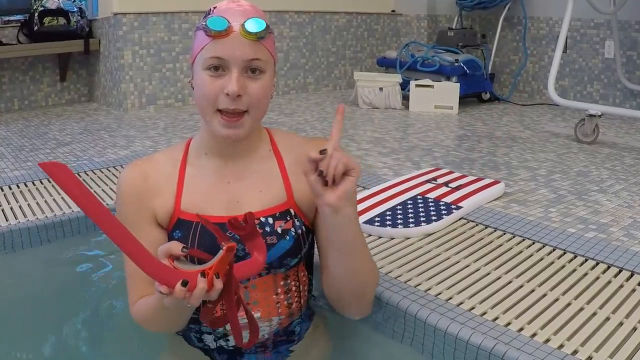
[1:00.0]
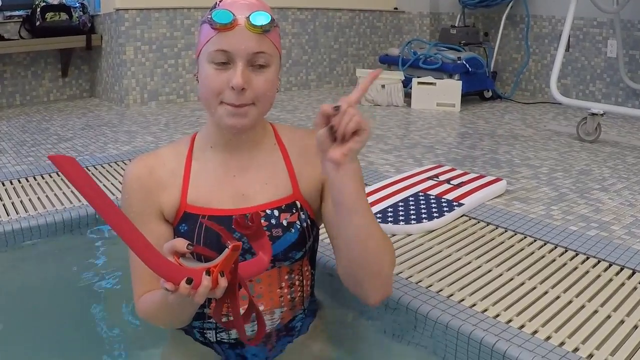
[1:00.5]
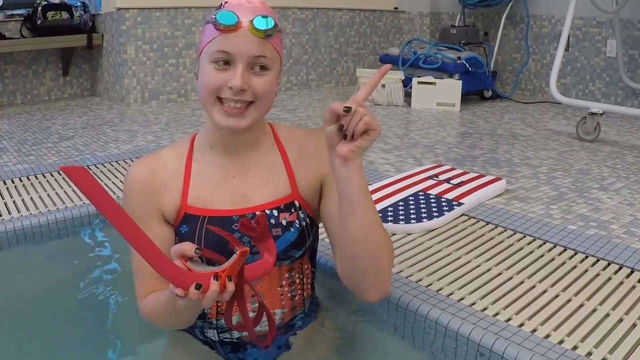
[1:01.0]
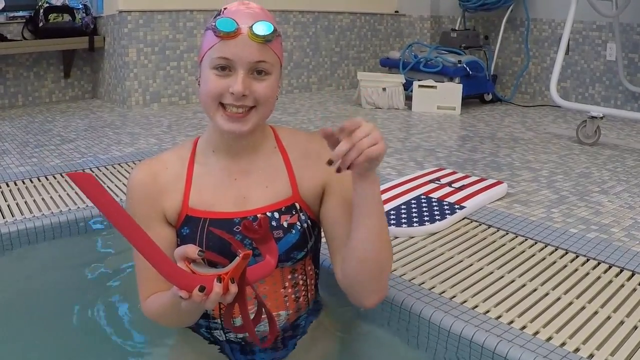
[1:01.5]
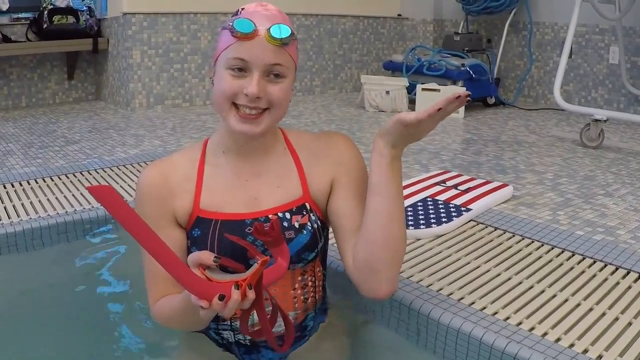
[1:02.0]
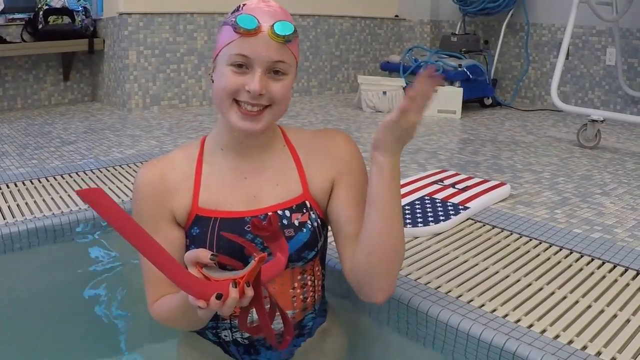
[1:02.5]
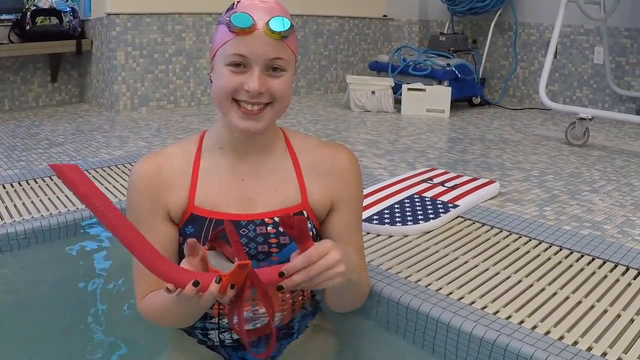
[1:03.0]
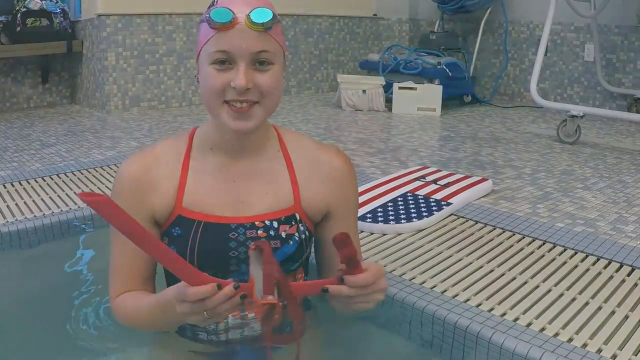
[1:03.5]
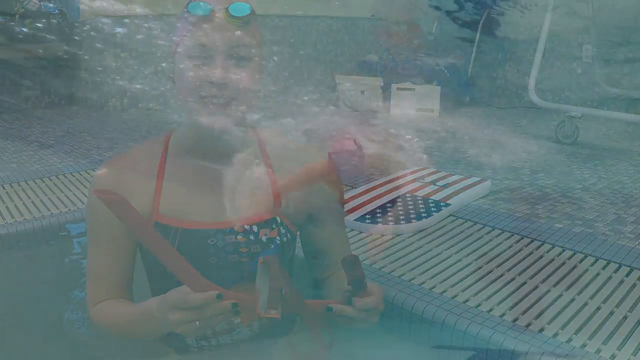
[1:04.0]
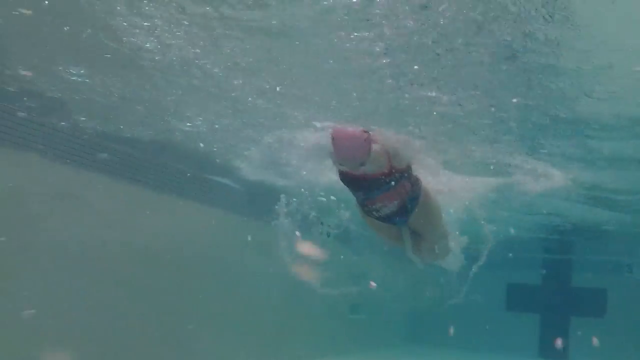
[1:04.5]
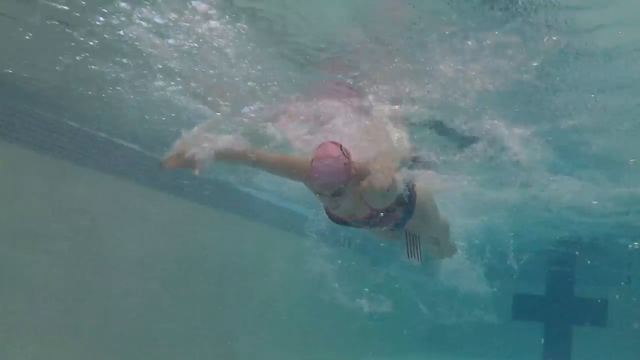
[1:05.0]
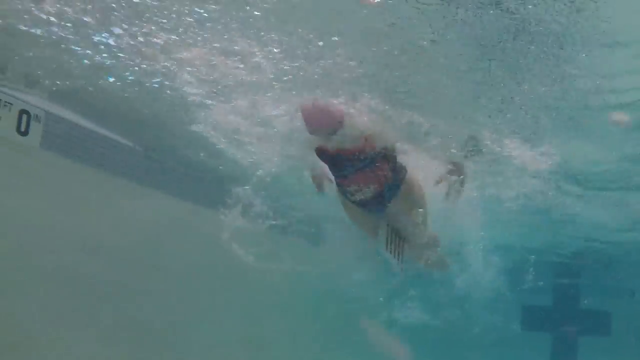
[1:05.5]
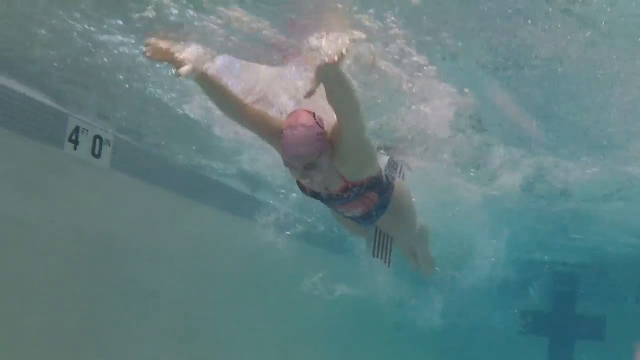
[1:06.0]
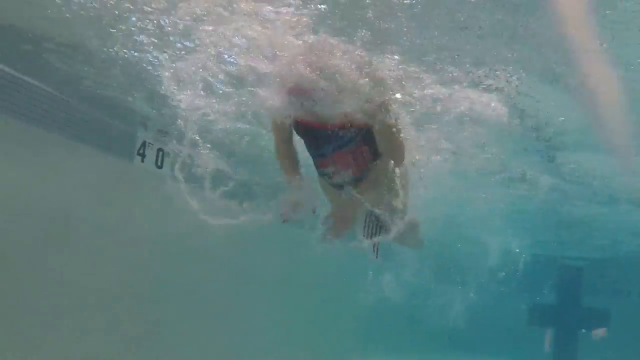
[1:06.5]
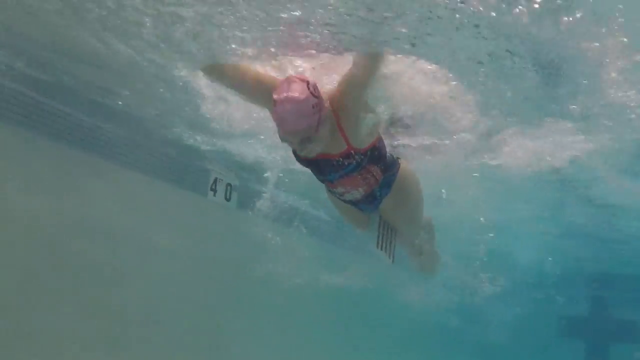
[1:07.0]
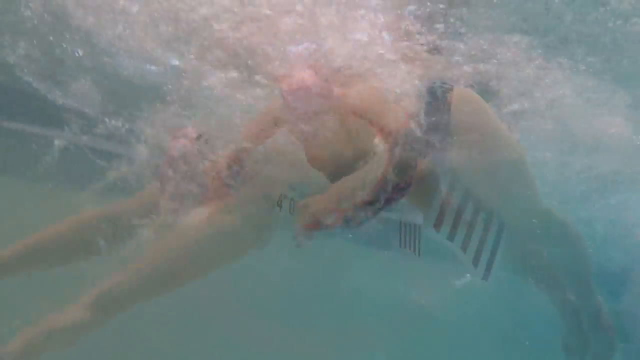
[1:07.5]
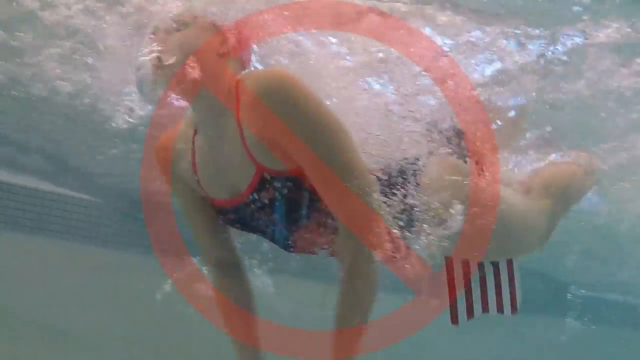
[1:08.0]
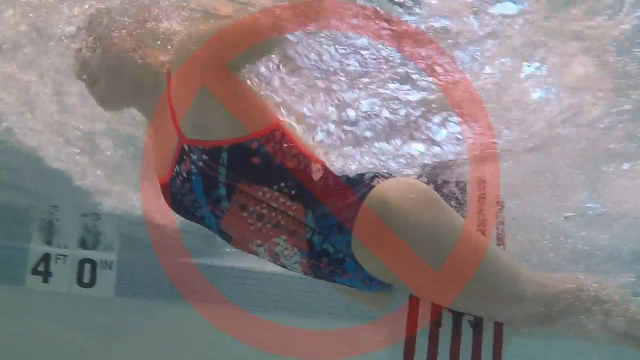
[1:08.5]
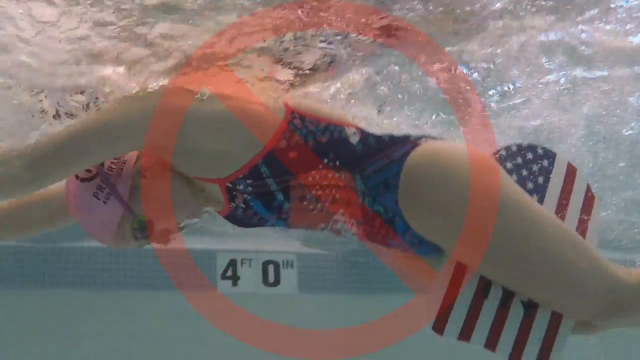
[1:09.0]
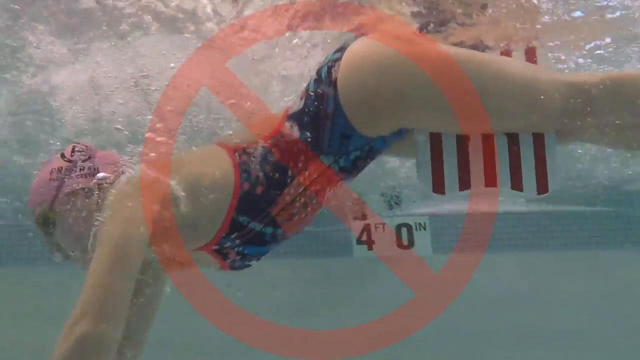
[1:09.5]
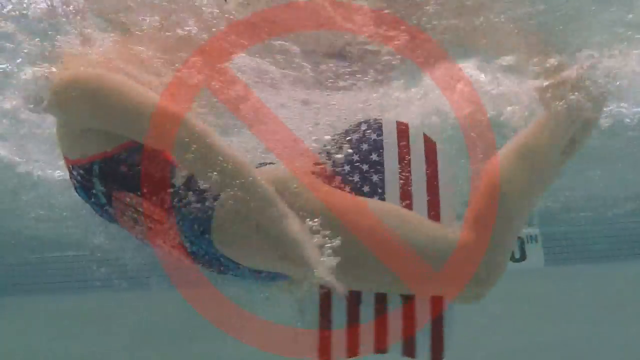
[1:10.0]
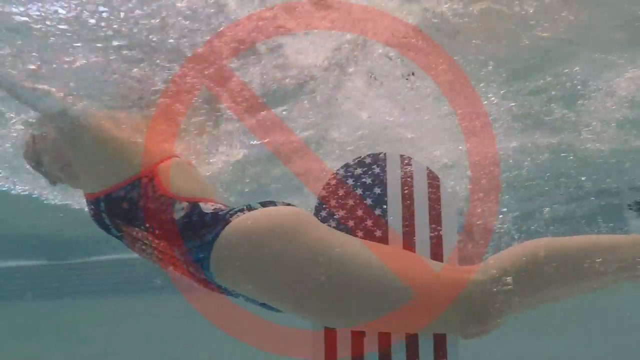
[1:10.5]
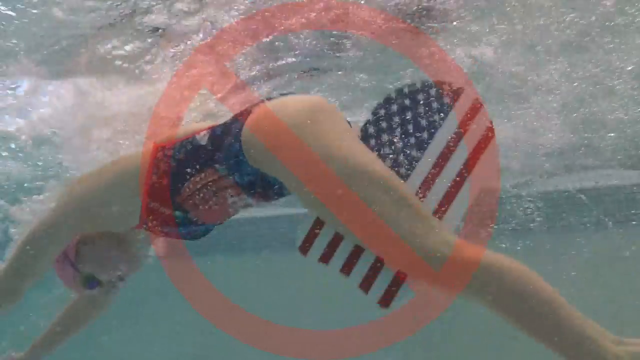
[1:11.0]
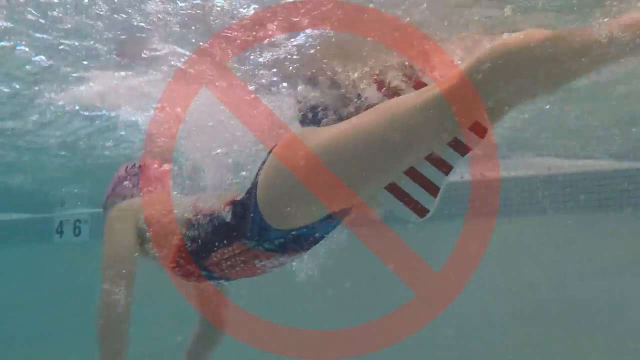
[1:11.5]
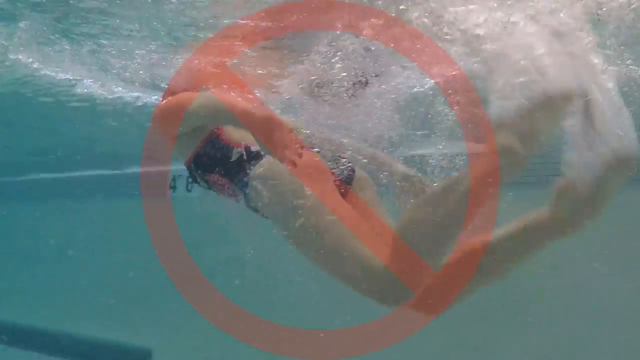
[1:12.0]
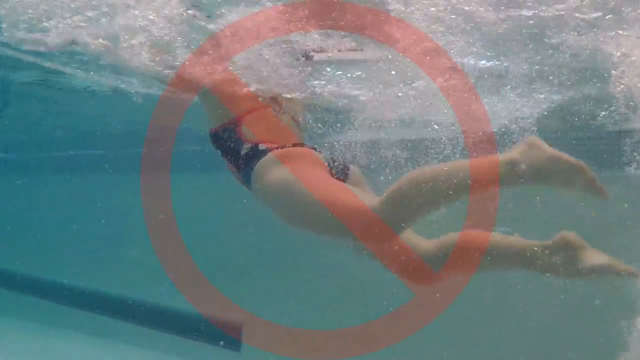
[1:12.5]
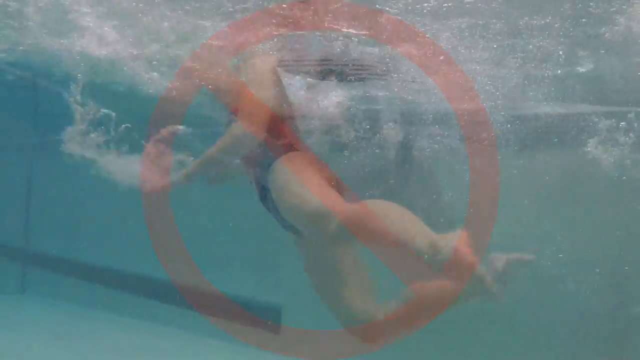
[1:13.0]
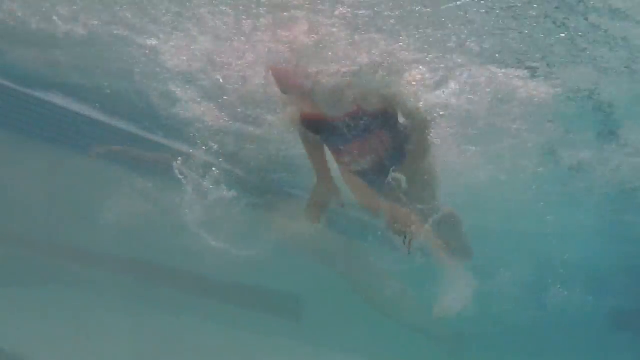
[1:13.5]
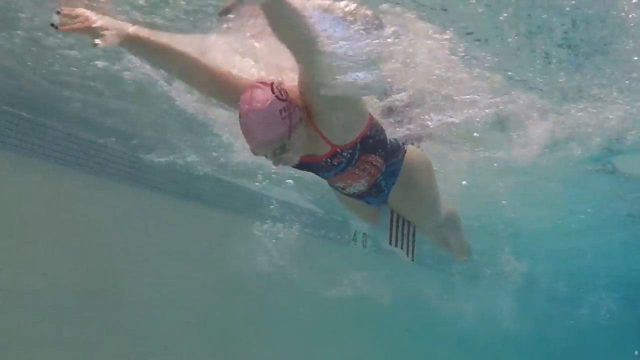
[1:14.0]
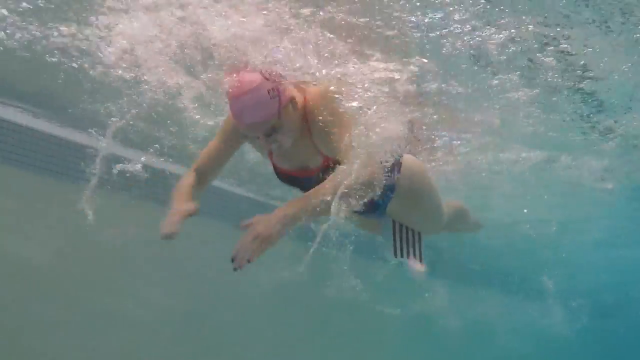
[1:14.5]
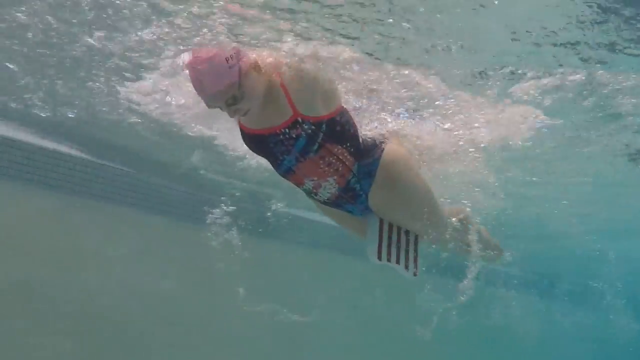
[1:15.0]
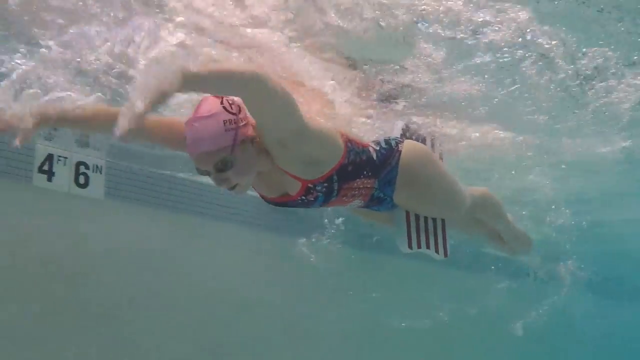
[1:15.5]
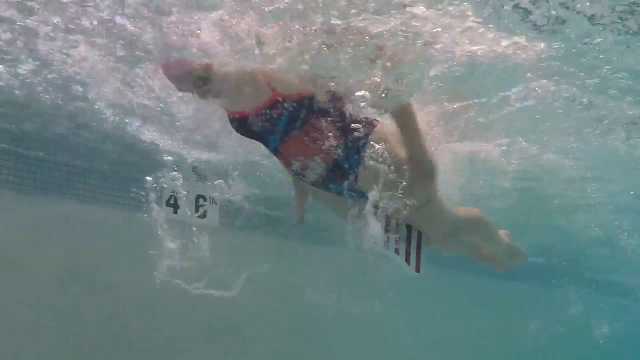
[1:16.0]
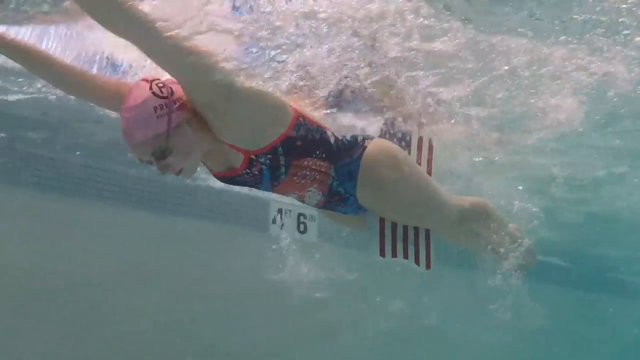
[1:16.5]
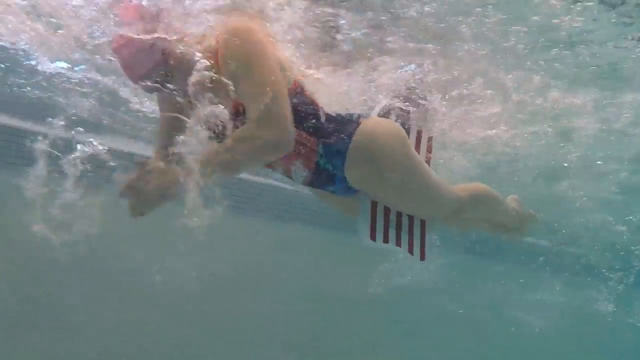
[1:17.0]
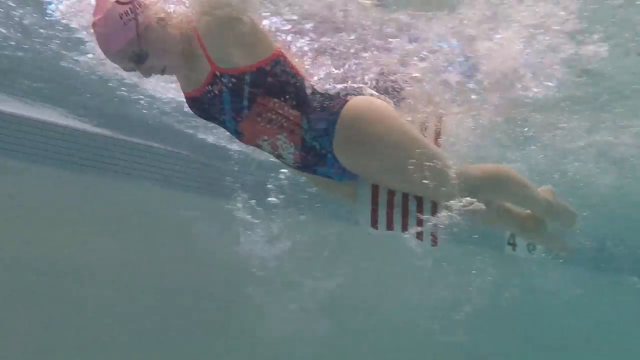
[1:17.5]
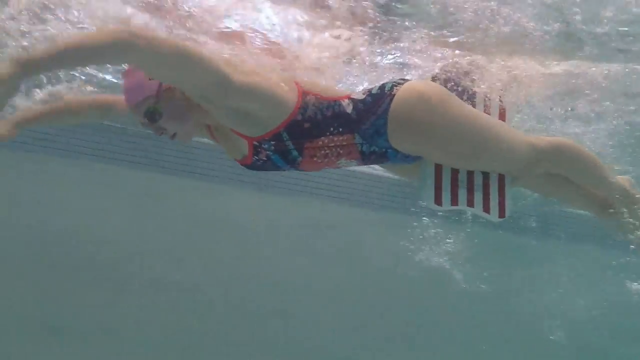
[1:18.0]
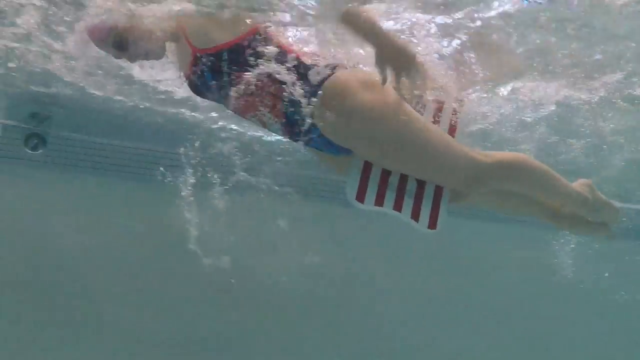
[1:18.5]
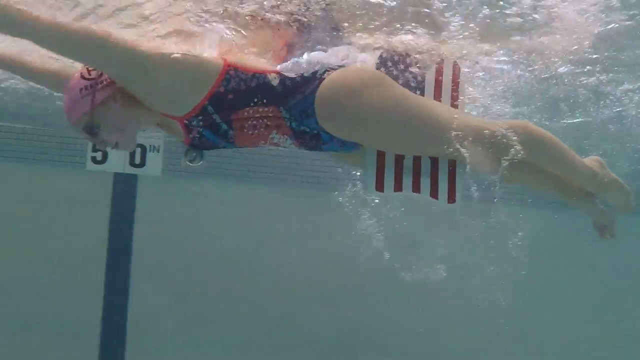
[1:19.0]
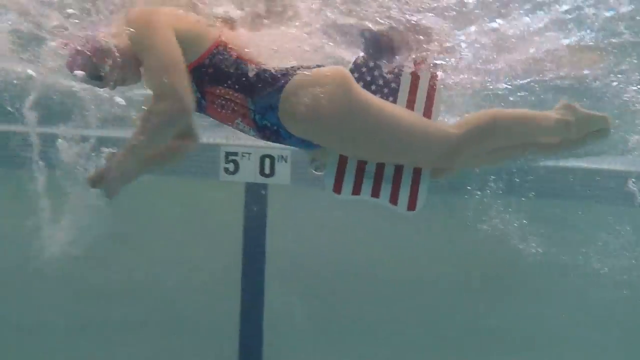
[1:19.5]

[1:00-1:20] The woman who demonstrated the butterfly shows a red snorkel, and she has maroon fingernail polish. She is sort of pointing to the left, then, holding the snorkel in her right hand, holds her left hand out flat. The video then shows her doing the butterfly stroke across the pool with the kickboard between her two legs, so she can focus on the stroke with her arms and not the legs. It also shows what not to do: making too many movements and putting the butt up in the air. Then it shows how to do it, with the bottom half of the body almost not moving a lot, the kickboard still on.